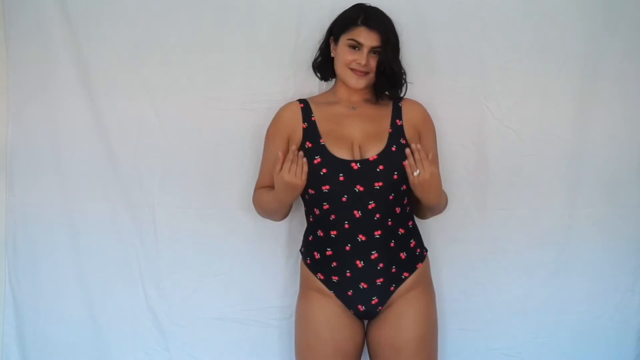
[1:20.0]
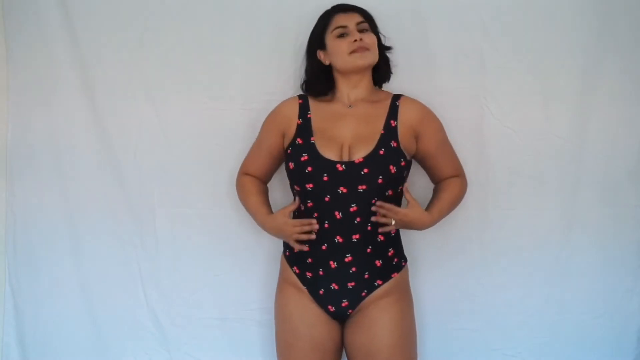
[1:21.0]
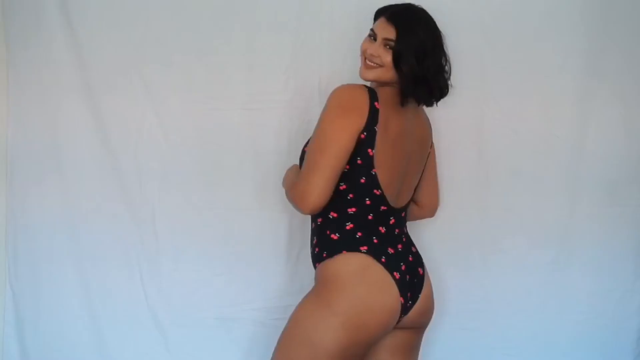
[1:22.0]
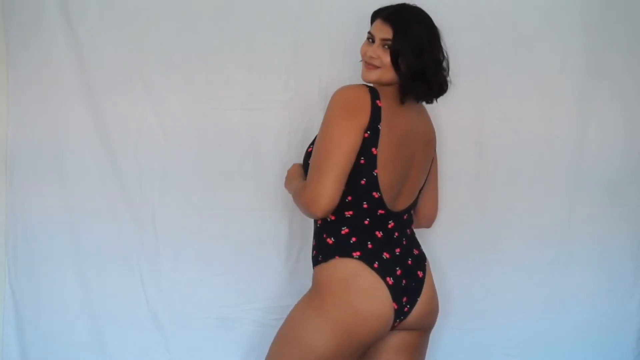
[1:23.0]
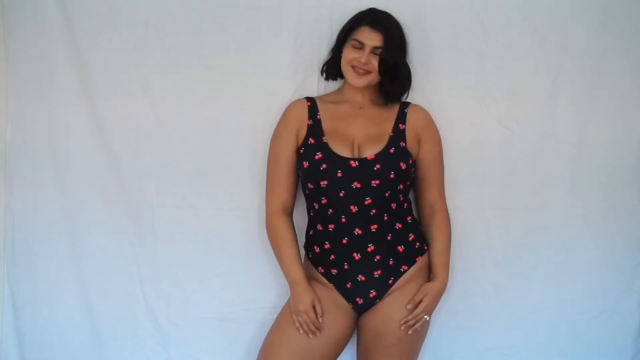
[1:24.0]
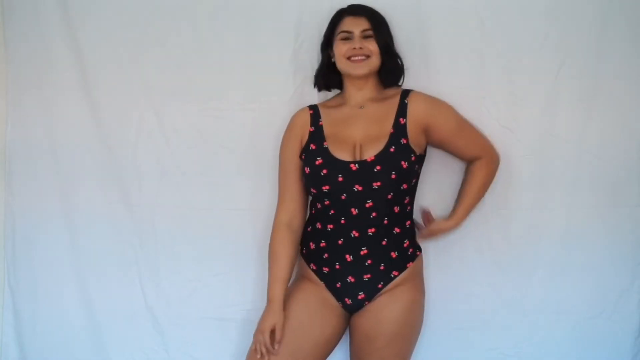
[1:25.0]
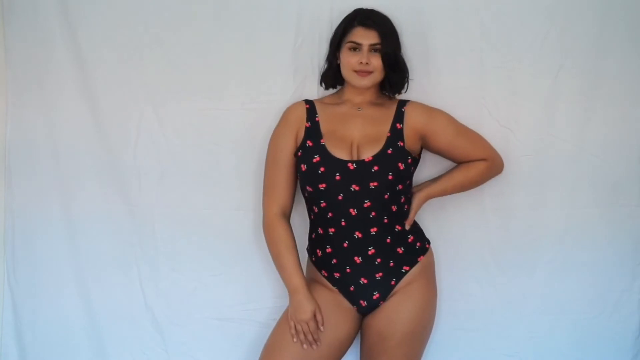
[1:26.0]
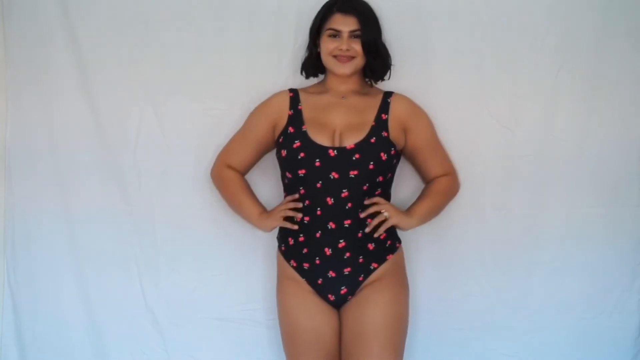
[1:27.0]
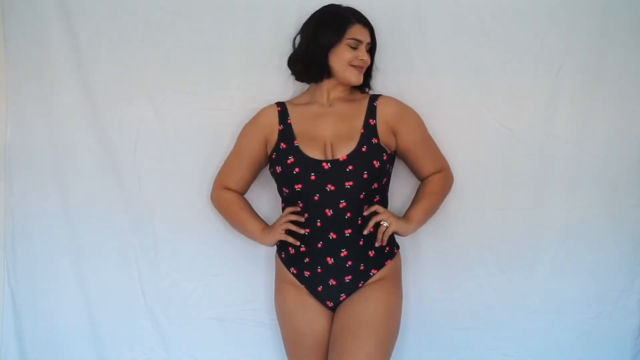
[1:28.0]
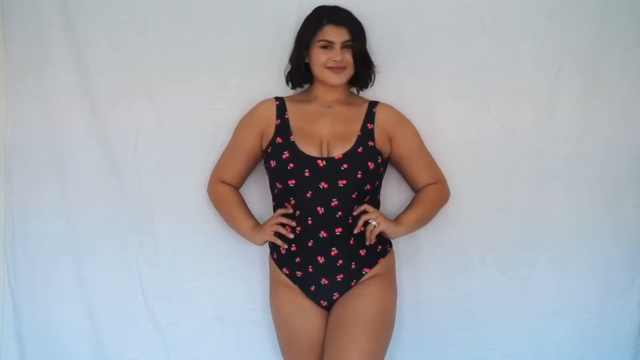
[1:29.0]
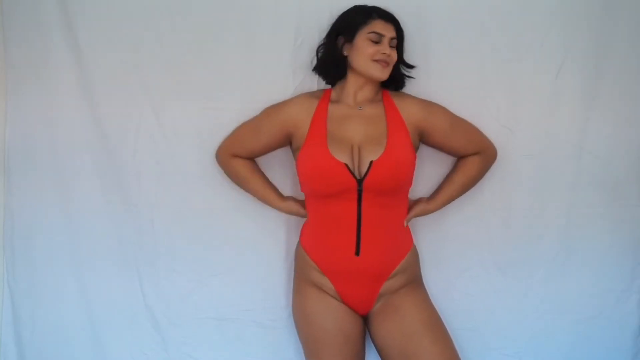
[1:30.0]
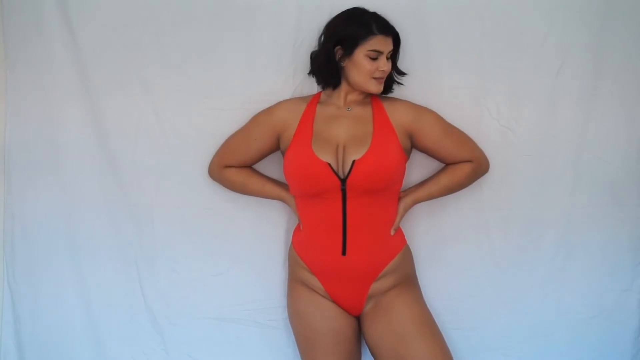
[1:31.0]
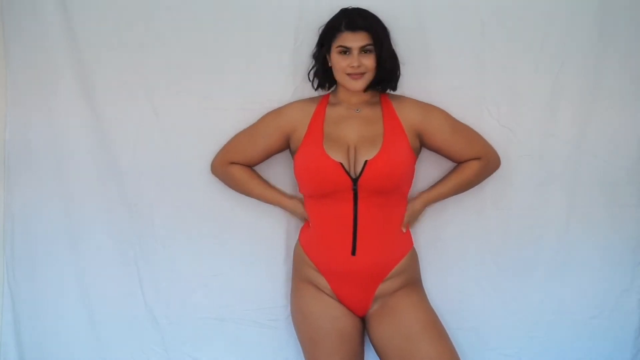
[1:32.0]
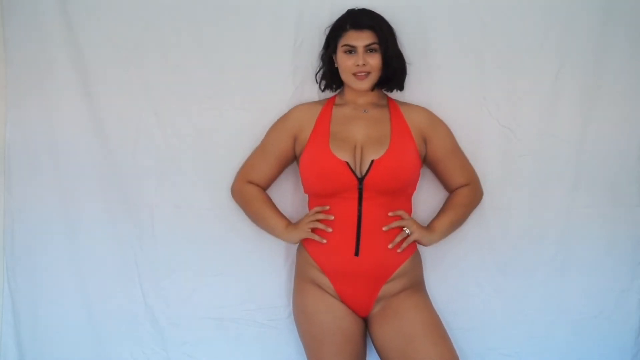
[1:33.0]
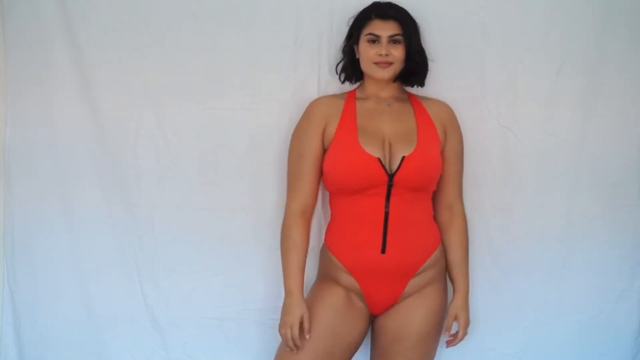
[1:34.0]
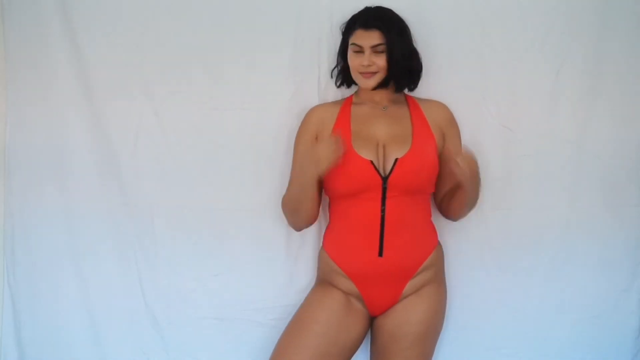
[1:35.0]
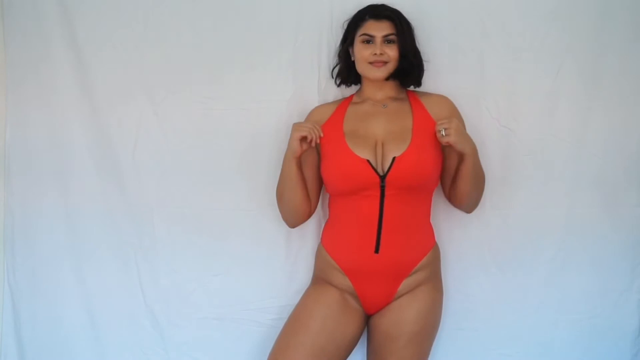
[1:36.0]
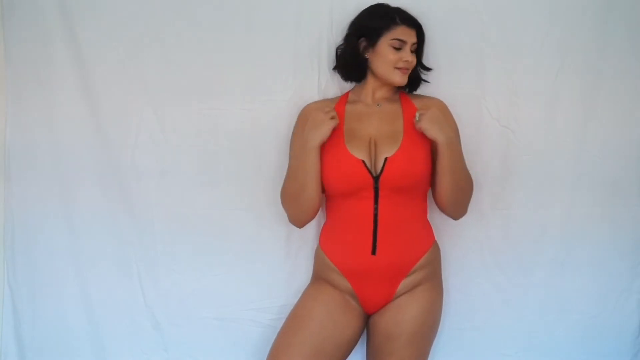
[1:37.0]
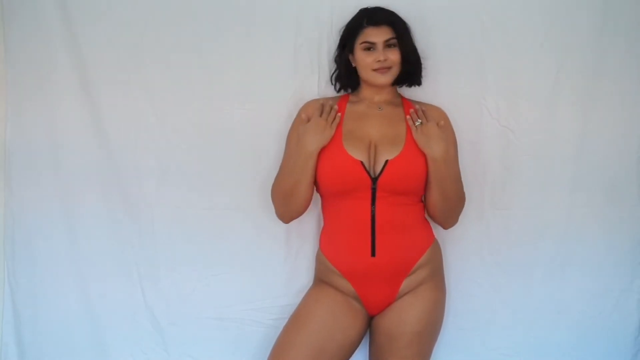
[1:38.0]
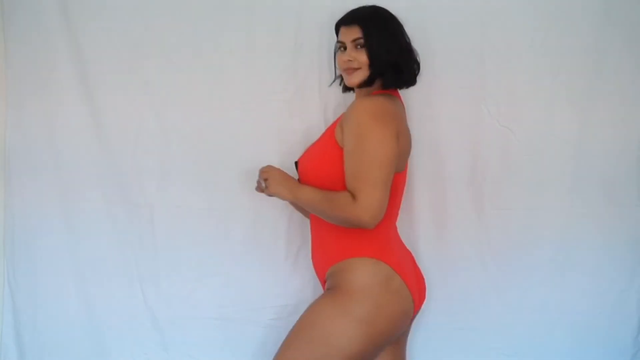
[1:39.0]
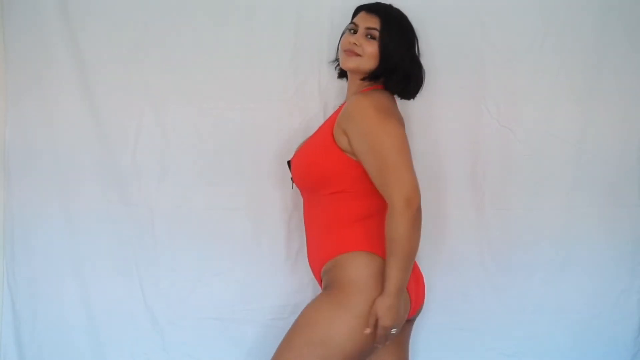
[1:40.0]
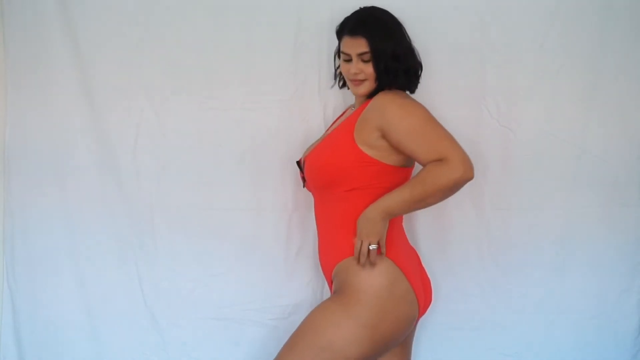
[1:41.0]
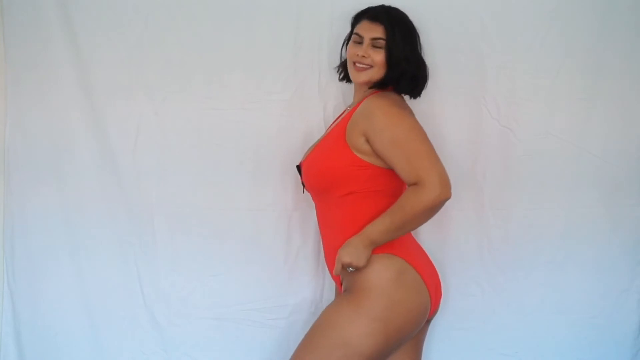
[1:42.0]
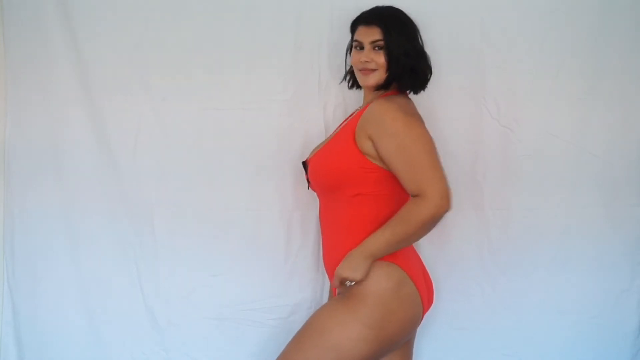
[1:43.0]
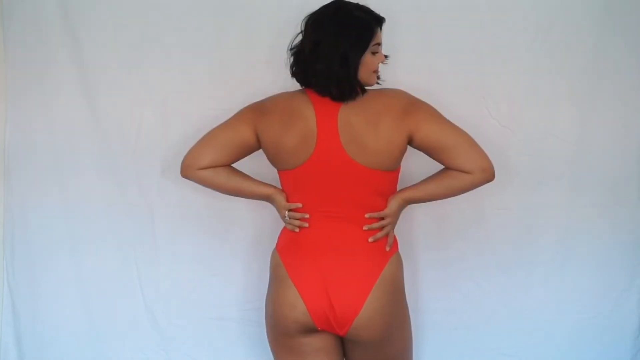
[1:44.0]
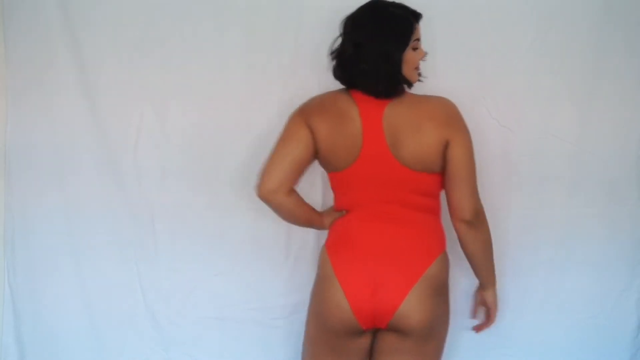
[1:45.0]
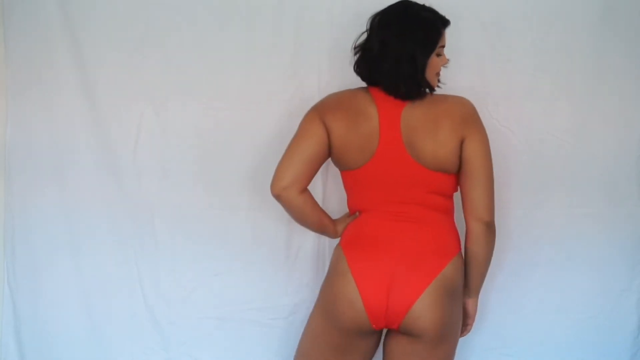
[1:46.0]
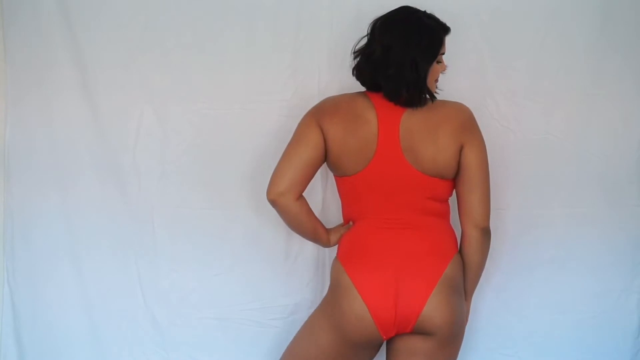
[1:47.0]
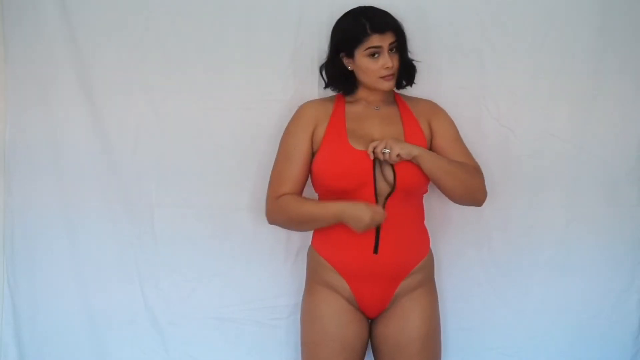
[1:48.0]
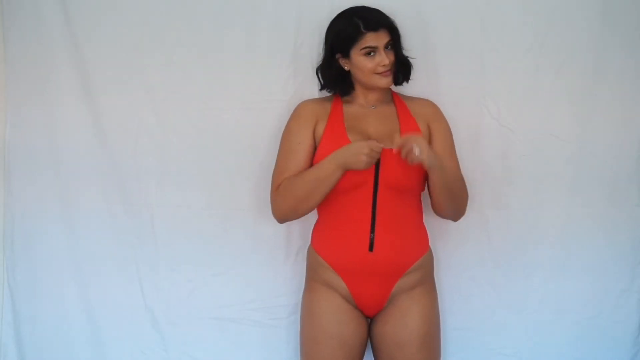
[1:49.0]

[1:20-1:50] From the same angle, the woman still stands in front of a white curtain in the black one-piece bathing suit covered in cherries. She strokes both hands down her sides and then puts her hands on her hips. A jump cut shows her turned three quarters away from the camera, revealing the shape of the back of the bathing suit, as she transfers her weight from hip to hip. After another jump cut she faces the camera again with her hands by her sides resting on her thighs, smiling at the camera before putting her left hand on her hip again. Then she puts both hands on her hips and looks down toward the right side of the frame before looking back at the camera with a smile. A jump cut returns to the same environment: she still stands in front of the white curtain, visible from the top of her head to halfway down her thighs, but now wears a different bathing suit, an orange one-piece with a black zip down the middle that is very slightly undone at the top. She puts her hands on her hips, looks down toward the right side of the frame and then back to the camera, then transfers her weight while moving her arms around and touching the straps. After a jump cut she has turned to one side, facing the left side of the frame with her whole body while turning her head to look back toward the camera. She adjusts the bathing suit before the video cuts to a shot of her back. A shot from the front follows, in which she unzips the zip very slightly at the top with a cheeky expression and a smile.